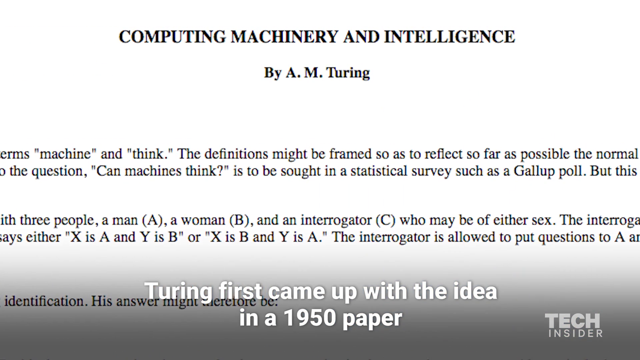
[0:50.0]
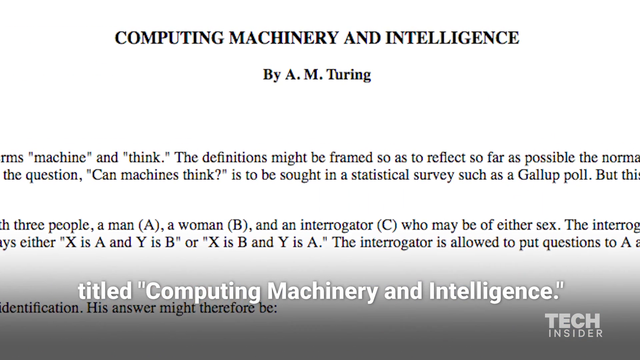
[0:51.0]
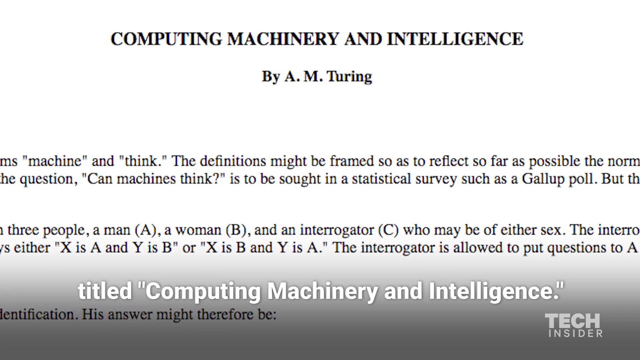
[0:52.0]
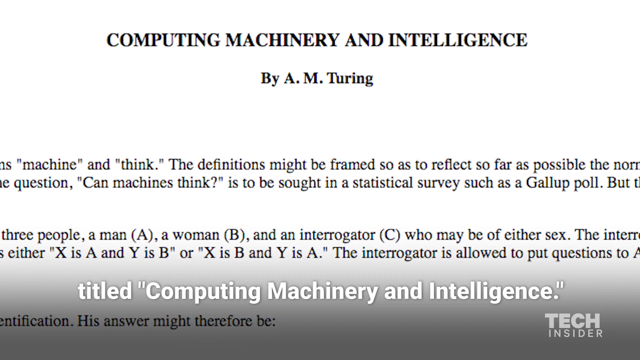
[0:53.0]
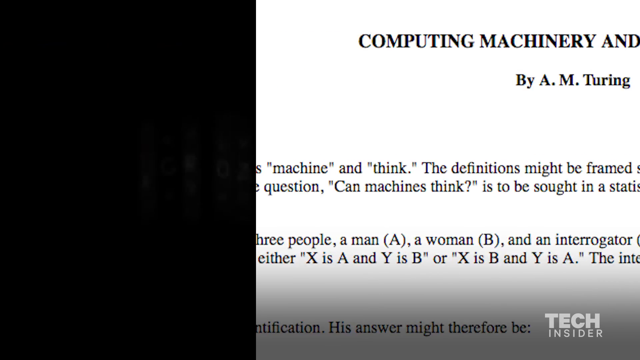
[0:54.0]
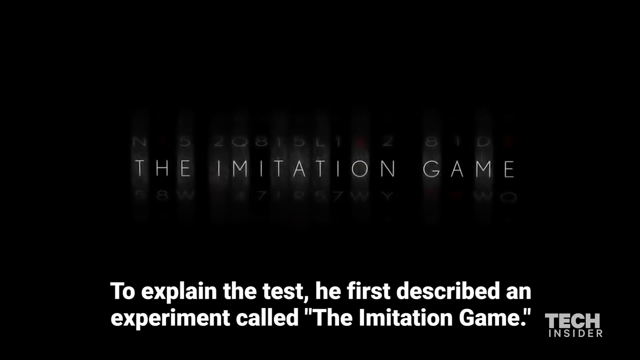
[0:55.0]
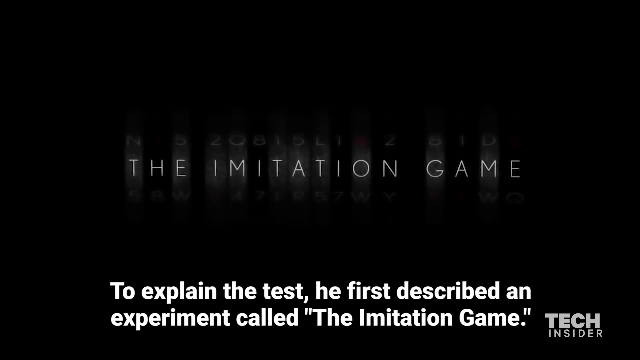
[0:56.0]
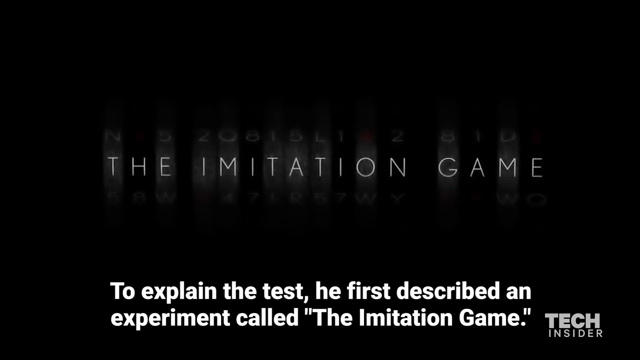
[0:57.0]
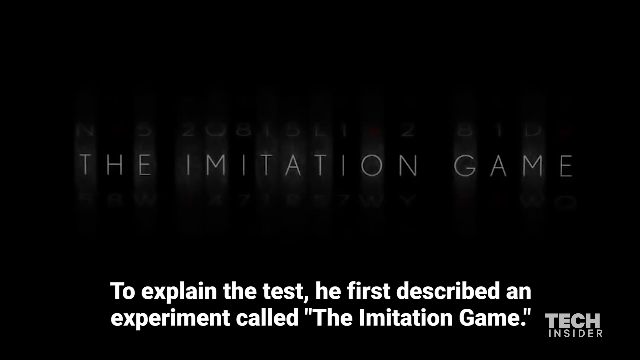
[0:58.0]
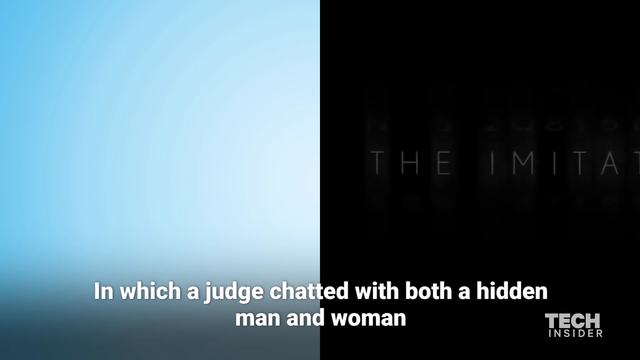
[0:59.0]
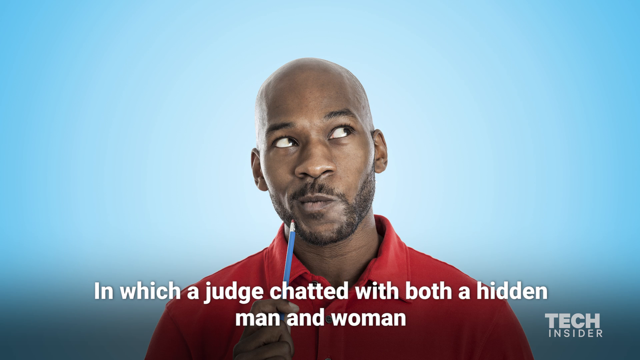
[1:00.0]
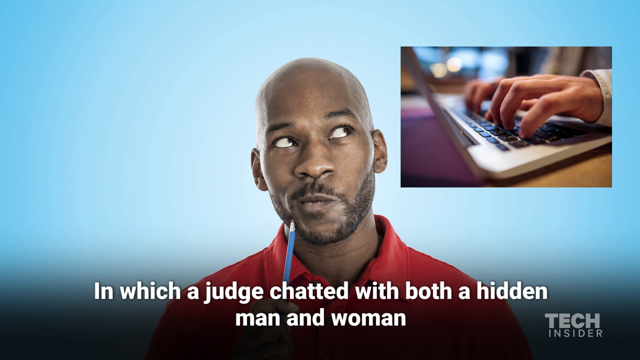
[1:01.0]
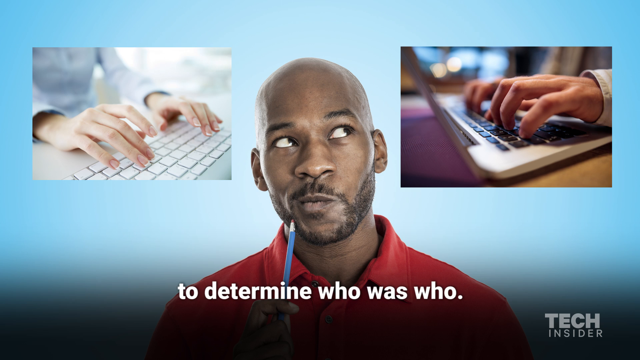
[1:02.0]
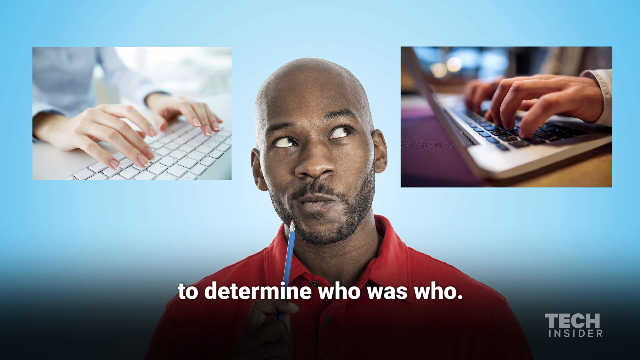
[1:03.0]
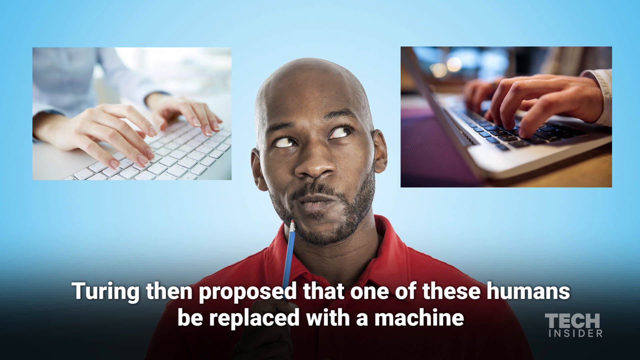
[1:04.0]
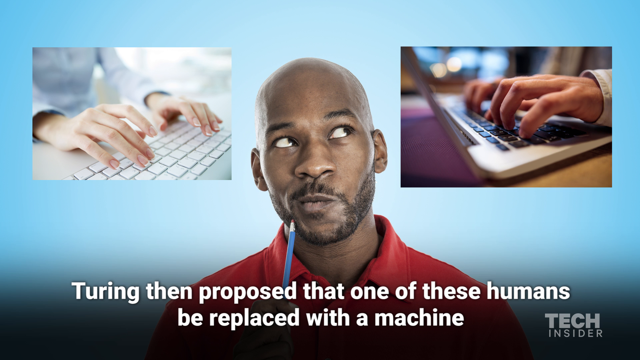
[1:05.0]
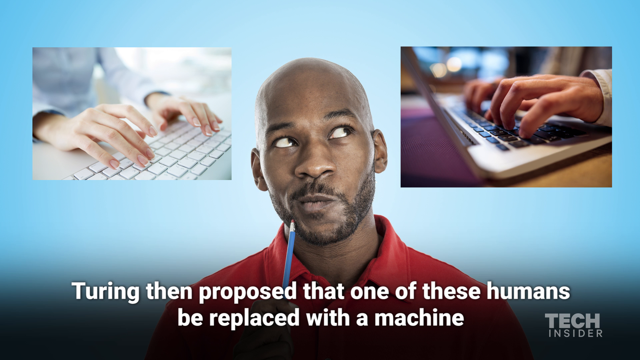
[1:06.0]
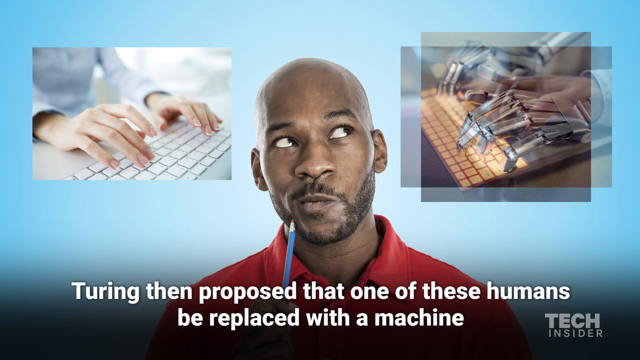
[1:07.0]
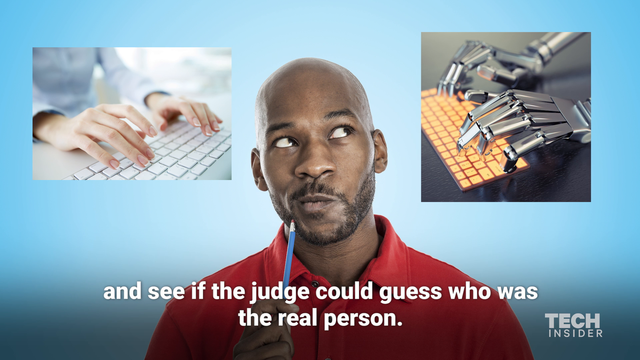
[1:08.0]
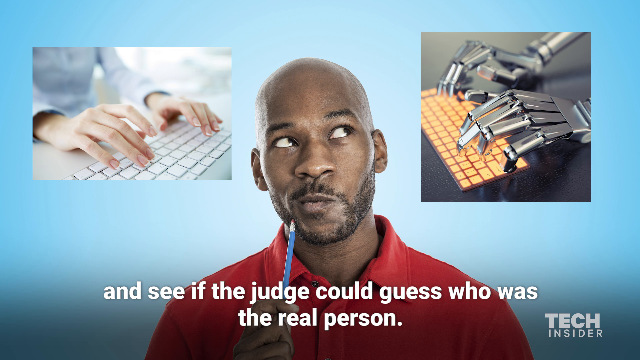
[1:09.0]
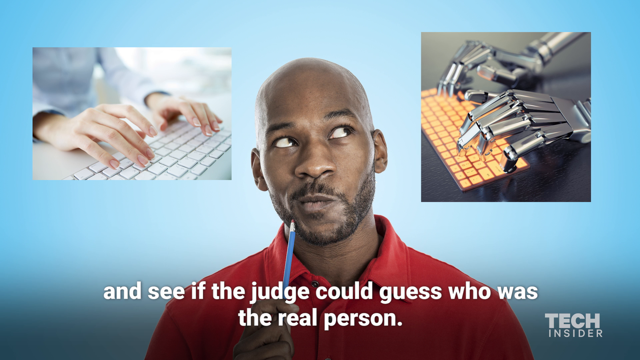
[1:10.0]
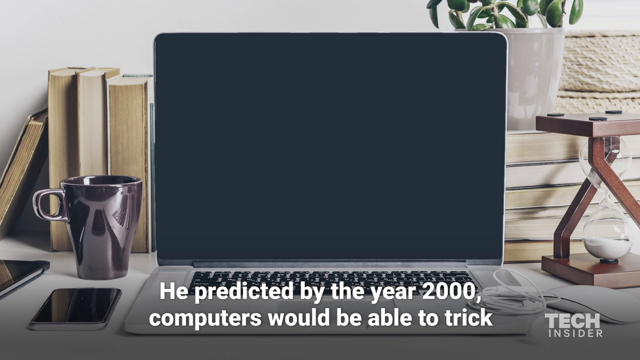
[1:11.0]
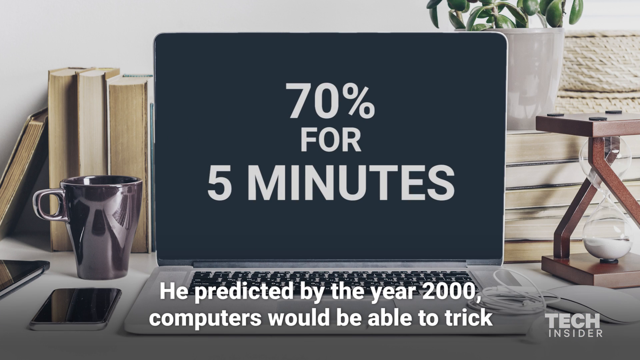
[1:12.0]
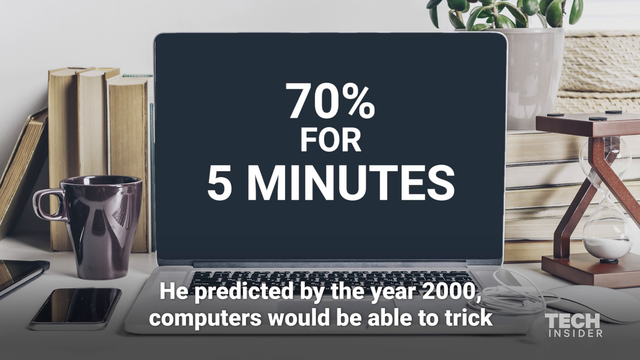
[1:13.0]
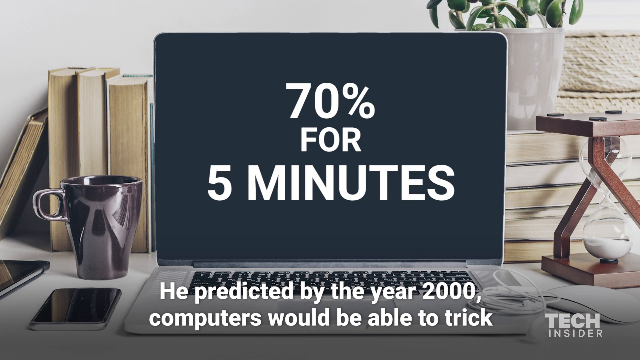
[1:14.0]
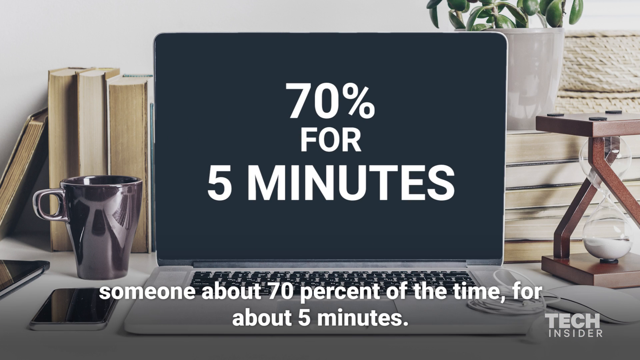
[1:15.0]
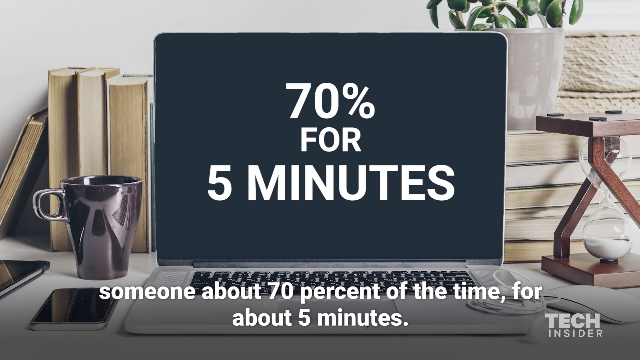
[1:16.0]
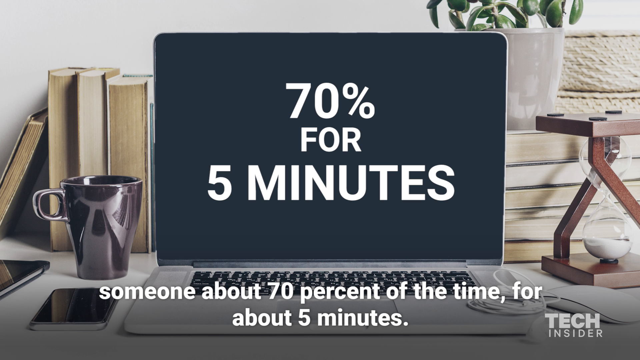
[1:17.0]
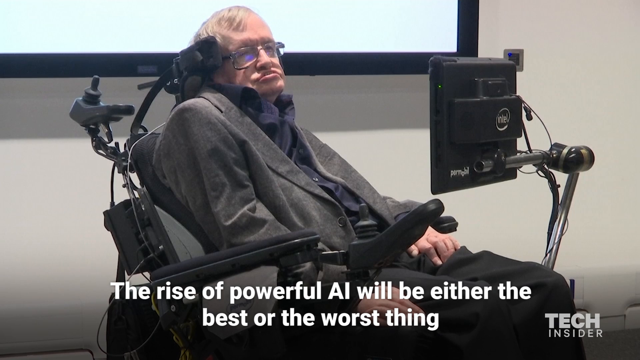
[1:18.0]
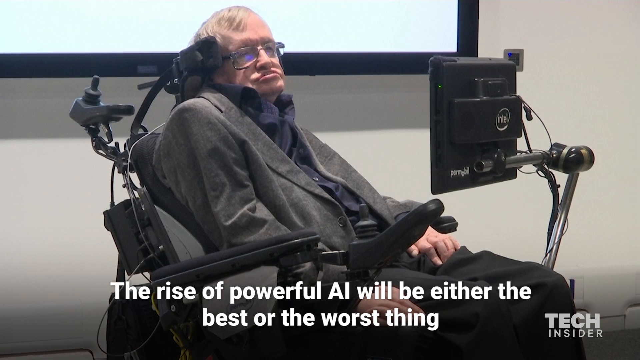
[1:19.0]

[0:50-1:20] The view zooms in on the title of the paper as the subtitle changes to "titled Computing Machinery and Intelligence", and it continues to zoom in. That slides to the right, revealing a black scene with many reels of different numbers and letters spinning closely together. The subtitle changes to "to explain the test, he first described an experiment called the imitation game." The reels settle on the words "the imitation game", and the view zooms in on them. From the left, a blue-to-white gradient appears, and a bald Black man looking thoughtfully toward the upper right comes in from the bottom; he wears a red shirt and holds a pencil up to his chin. The subtitle says "in which a judge chatted with both a hidden man and woman." A small picture of a pair of hands typing on a laptop keyboard appears in the upper right, then another picture of human hands typing on a laptop keyboard appears in the upper left. The subtitle says "to determine who was who," then changes to "Turing then proposed that one of these humans be replaced with a machine." The upper right picture changes to a pair of mechanical hands typing on a laptop keyboard, and the subtitle says "and see if the judge could guess who was the real person." A picture slides in from the left of an open laptop with a black screen. To its left are four books with a coffee cup in front of them, and a phone and another device in front of that. To the right is a stack of five books with a potted plant and a straw basket on it, and in front of that an hourglass with a square base and top. A mouse is to the right of the laptop keyboard. White text on the laptop screen appears: "70% for five minutes". The subtitle reads "he predicted by the year 2000, computers would be able to trick someone for about 70% of the time for about five minutes." A picture of Stephen Hawking in his wheelchair slides in from the left; he wears a grey suit and a dark blue shirt. The subtitle says "the rise of powerful AI will be either the best or worst thing".